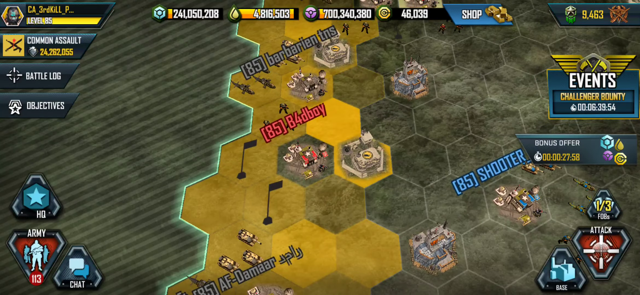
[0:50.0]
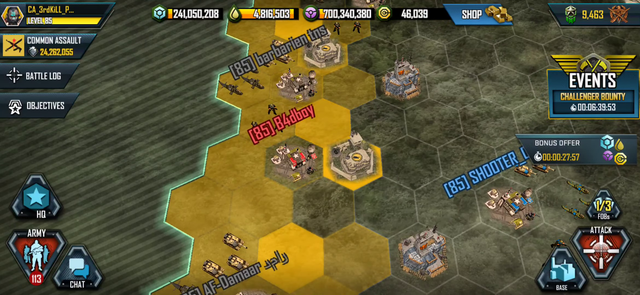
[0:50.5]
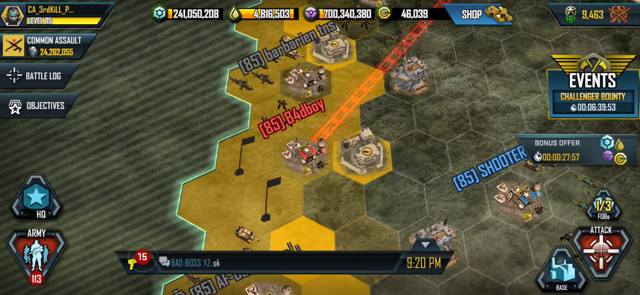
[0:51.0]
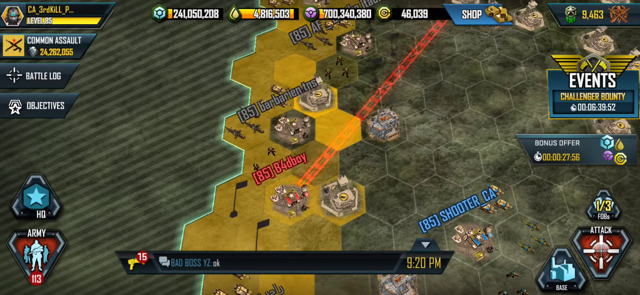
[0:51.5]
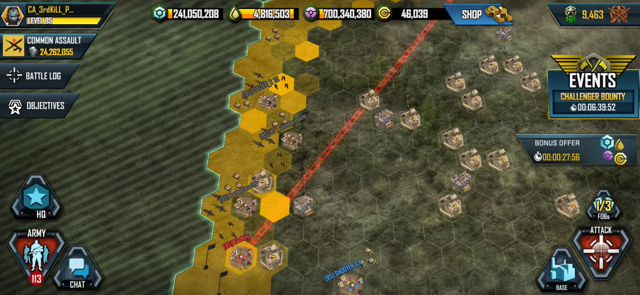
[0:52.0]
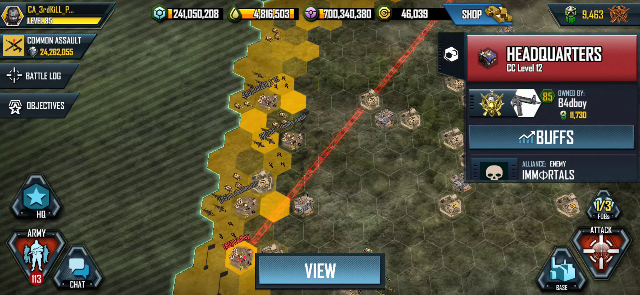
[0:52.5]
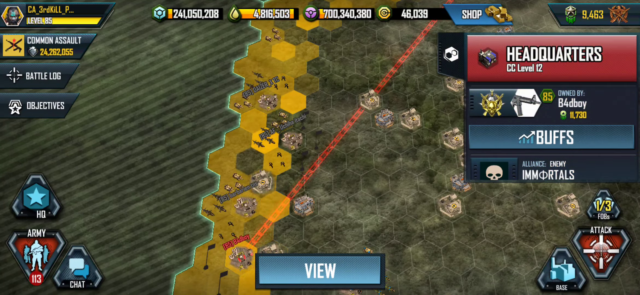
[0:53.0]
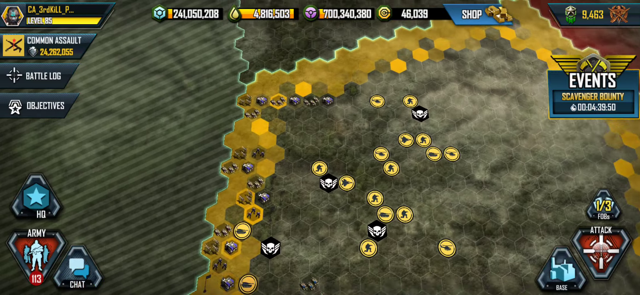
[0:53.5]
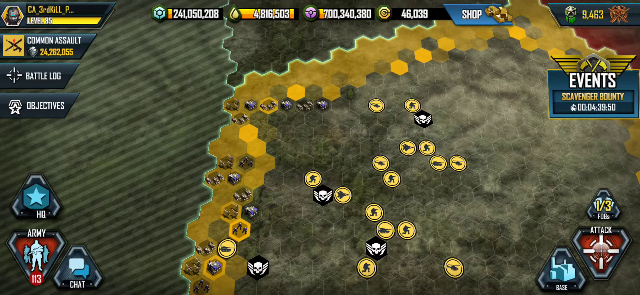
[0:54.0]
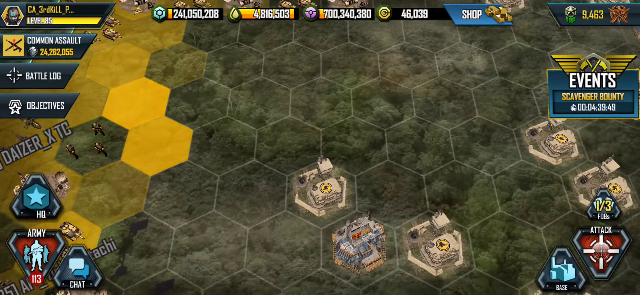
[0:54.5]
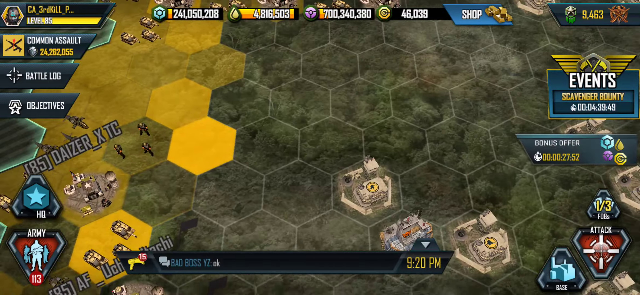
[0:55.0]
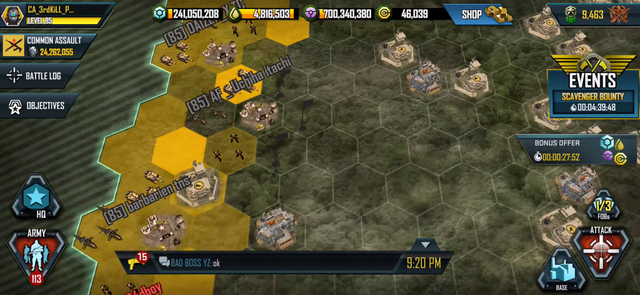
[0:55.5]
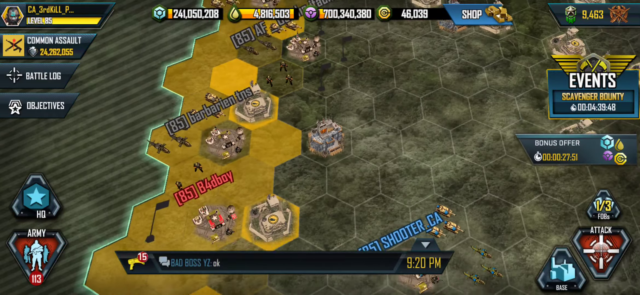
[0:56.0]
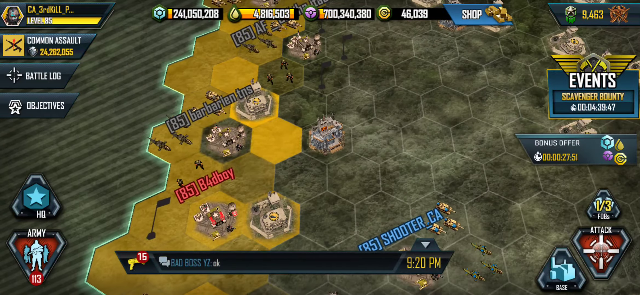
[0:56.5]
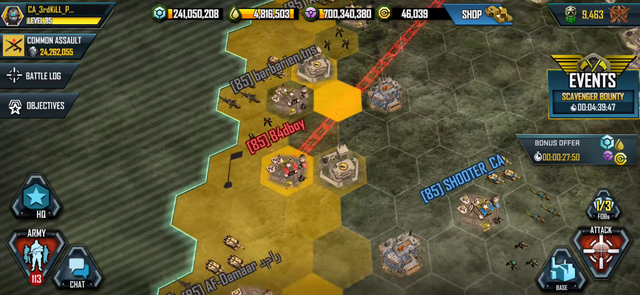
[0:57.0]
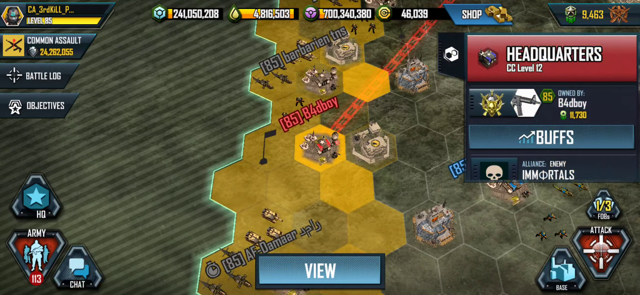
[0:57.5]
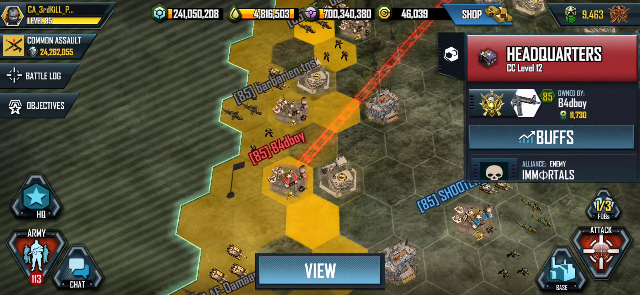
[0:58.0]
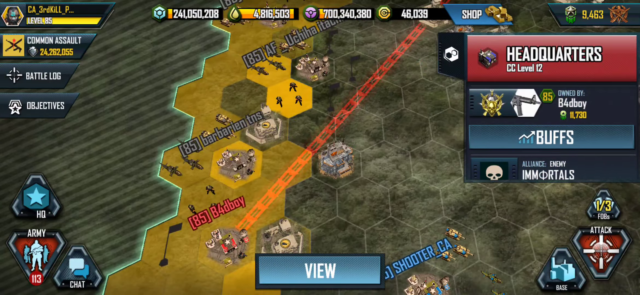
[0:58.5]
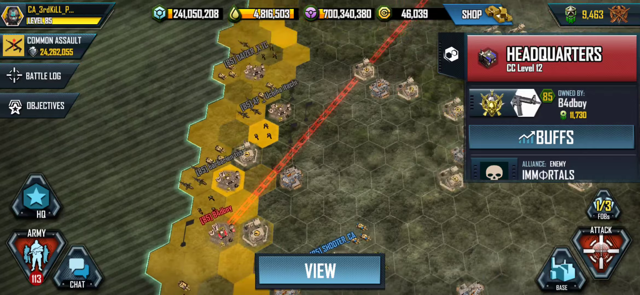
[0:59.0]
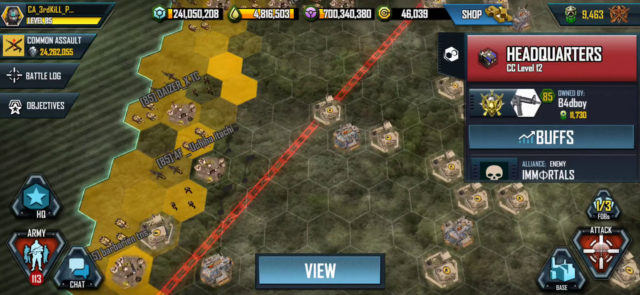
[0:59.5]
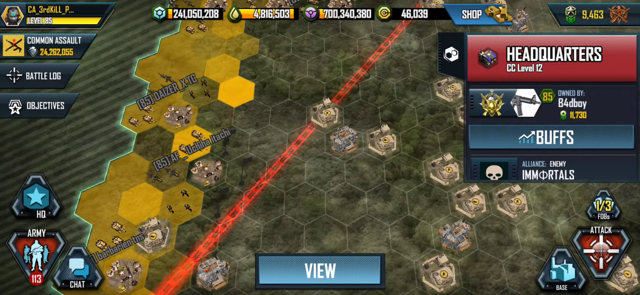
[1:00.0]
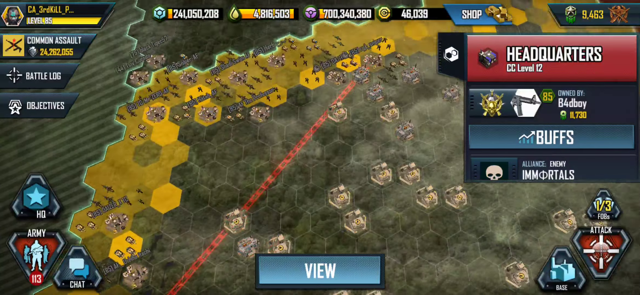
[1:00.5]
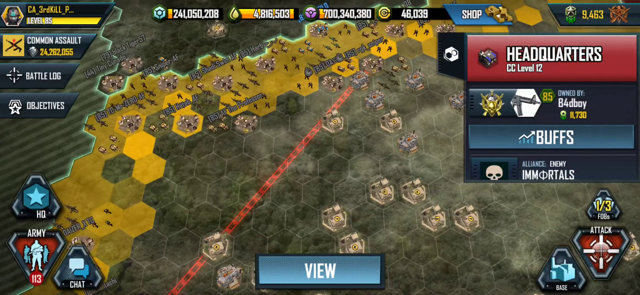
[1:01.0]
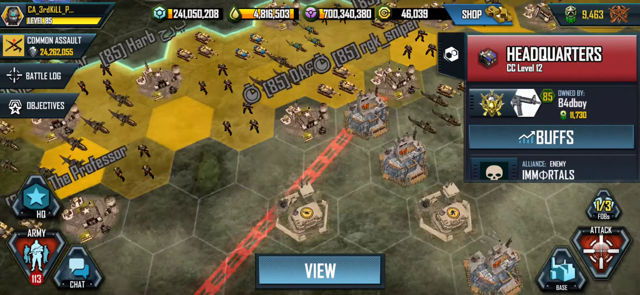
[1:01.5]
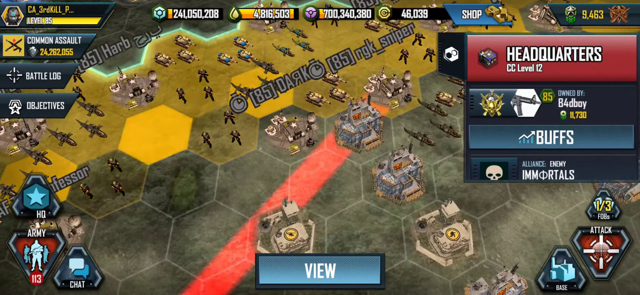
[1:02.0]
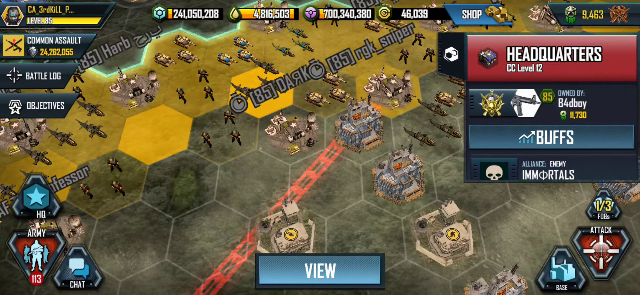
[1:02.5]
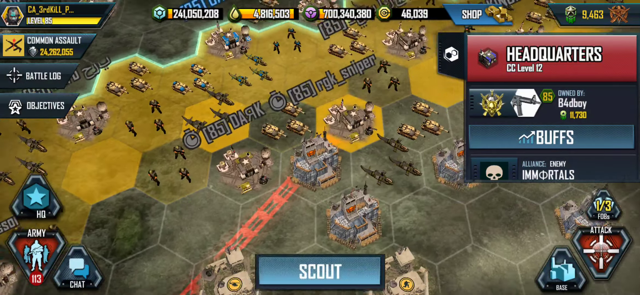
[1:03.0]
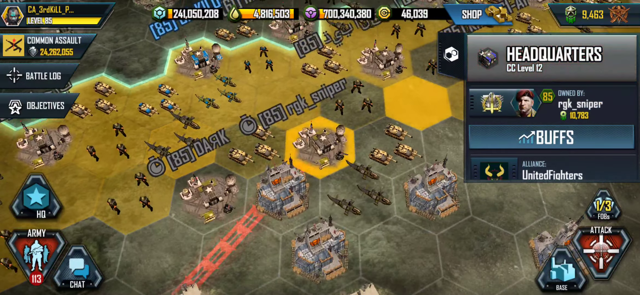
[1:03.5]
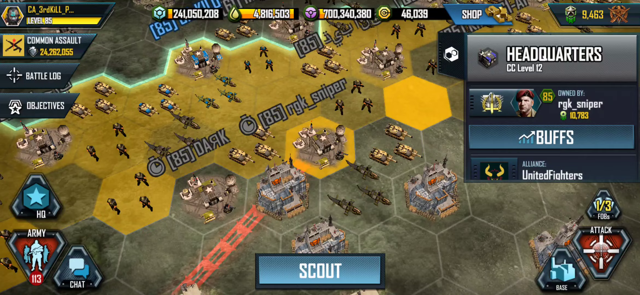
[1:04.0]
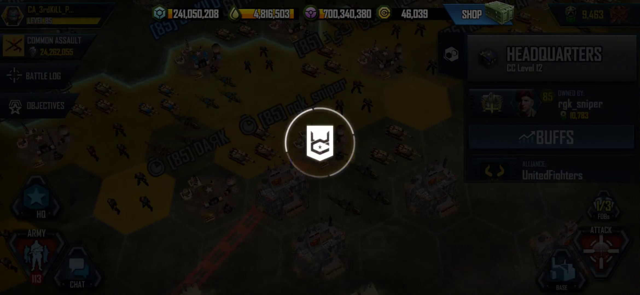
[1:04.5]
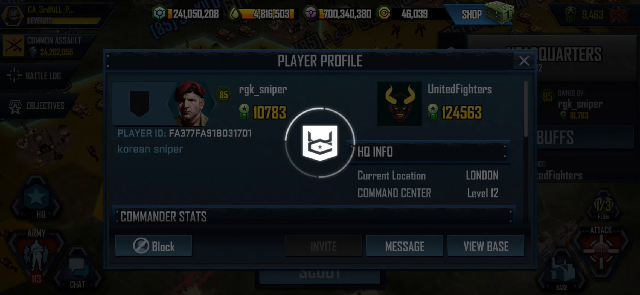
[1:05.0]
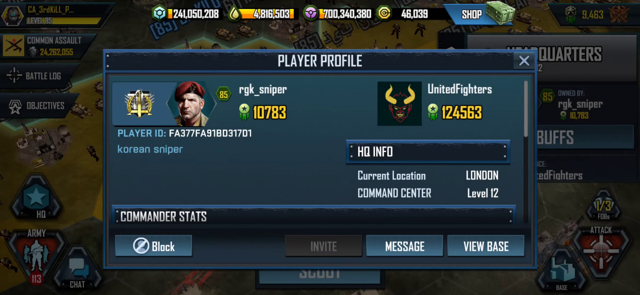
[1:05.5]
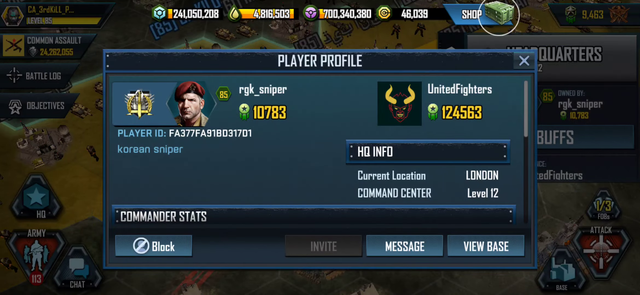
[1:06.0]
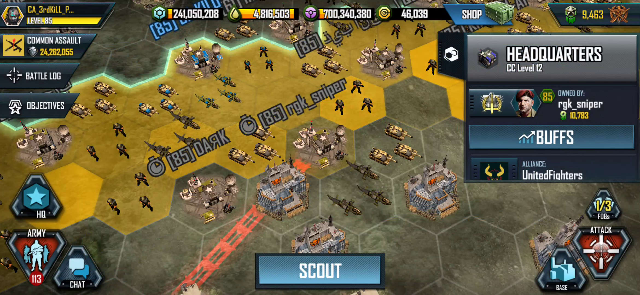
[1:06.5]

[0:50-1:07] The main hexagon map shows different players with different installations across the huge map. A red line still points toward B4D boy from a different hexagon; the player is apparently monitoring the situation. It looks like the attacker might be RGKSniper, or perhaps the player himself. Only the battle map is on screen, and on the right it says "headquarters CC level" along with the name of B4B boy and his score, plus the words "buffs" and "alliance enemy immortals". The player then again checks the profile of RGKSniper, so it looks like this is a battle between those two players.